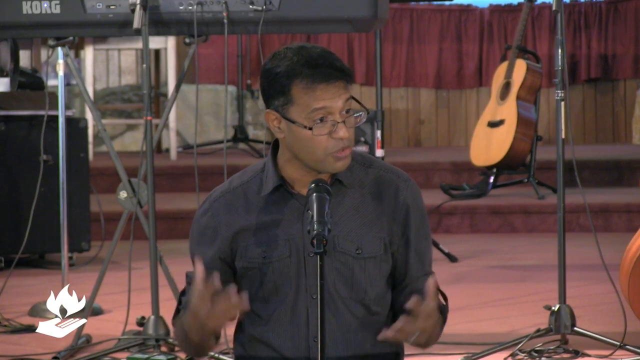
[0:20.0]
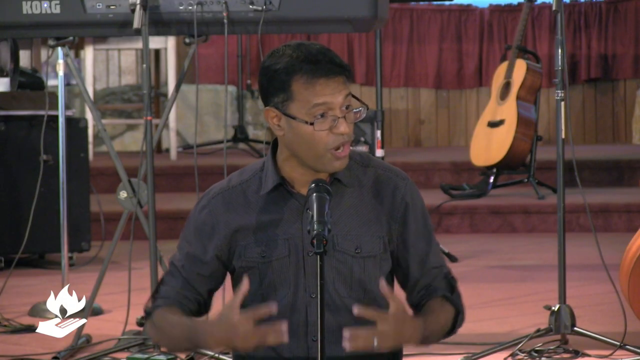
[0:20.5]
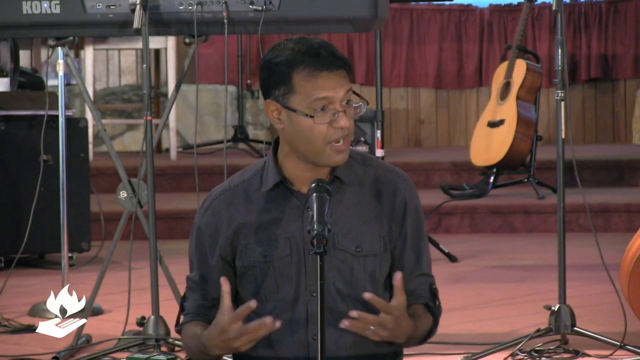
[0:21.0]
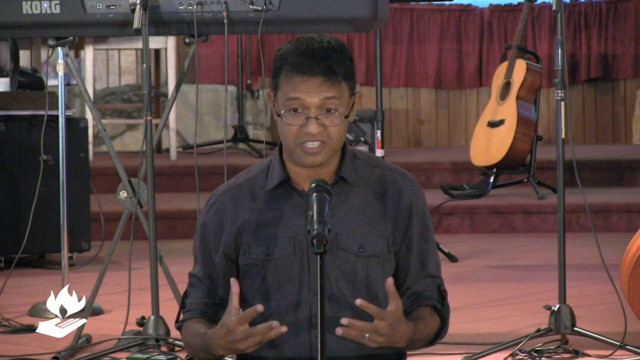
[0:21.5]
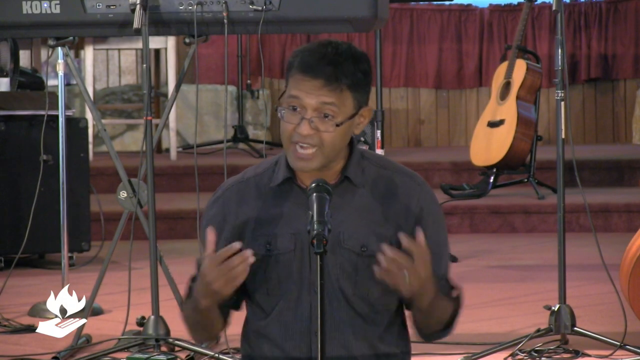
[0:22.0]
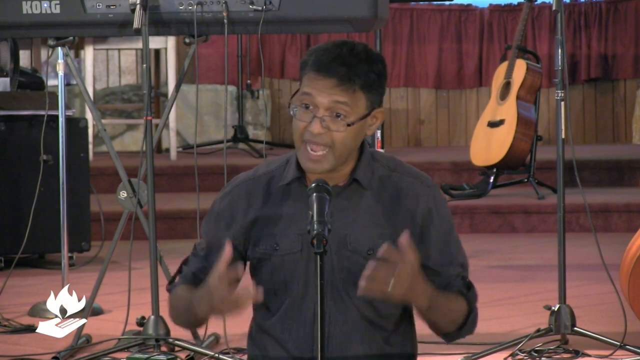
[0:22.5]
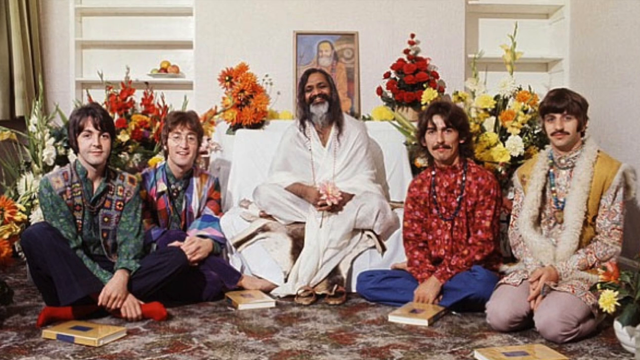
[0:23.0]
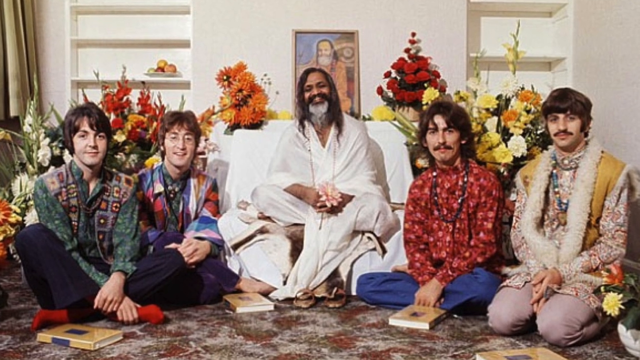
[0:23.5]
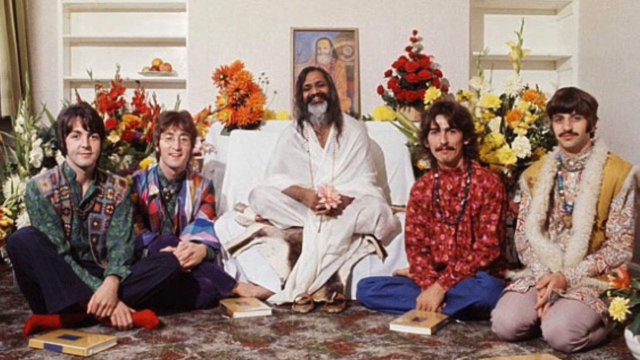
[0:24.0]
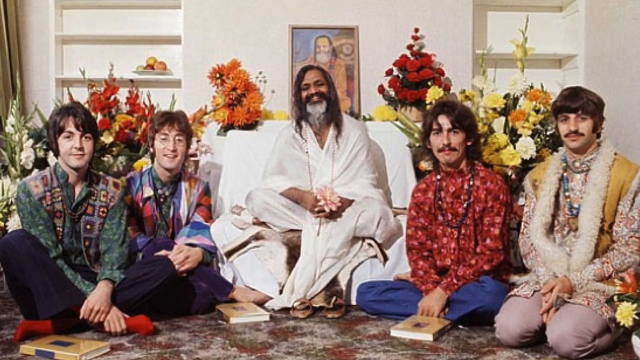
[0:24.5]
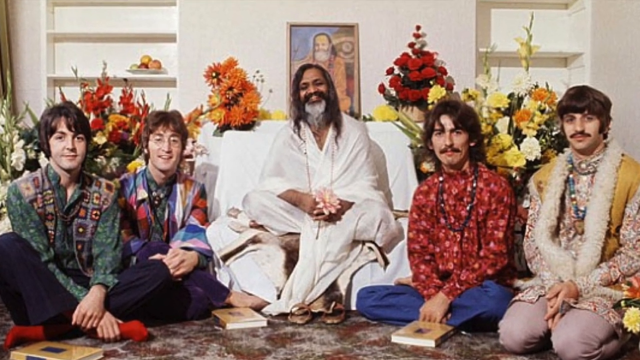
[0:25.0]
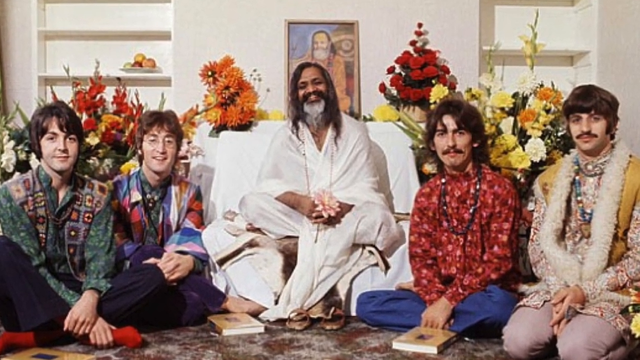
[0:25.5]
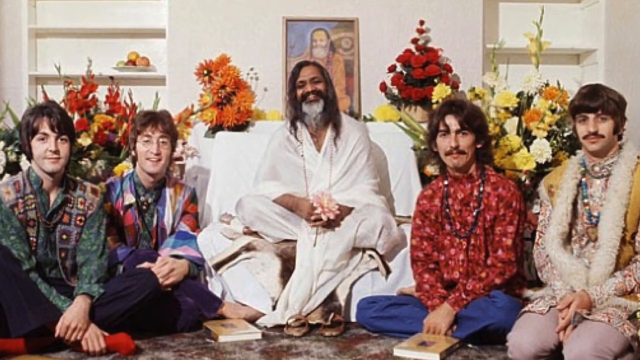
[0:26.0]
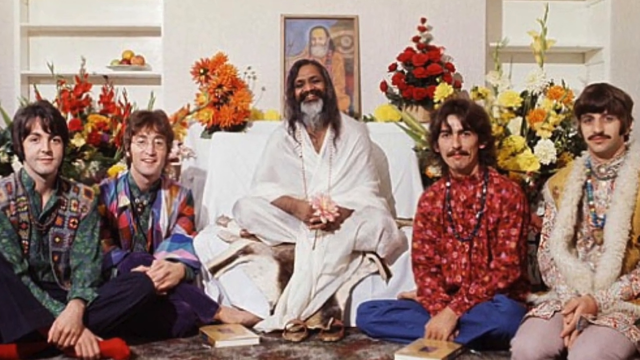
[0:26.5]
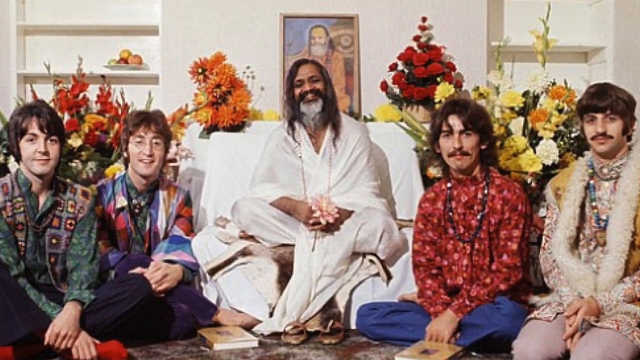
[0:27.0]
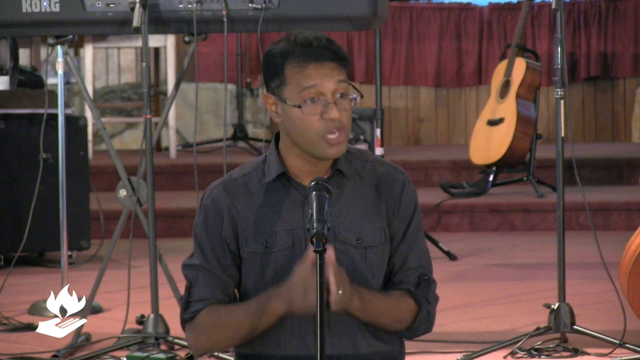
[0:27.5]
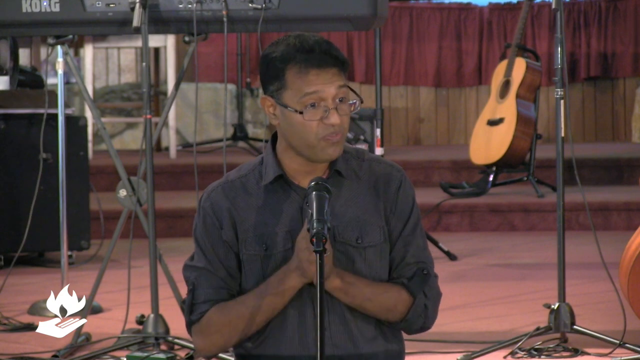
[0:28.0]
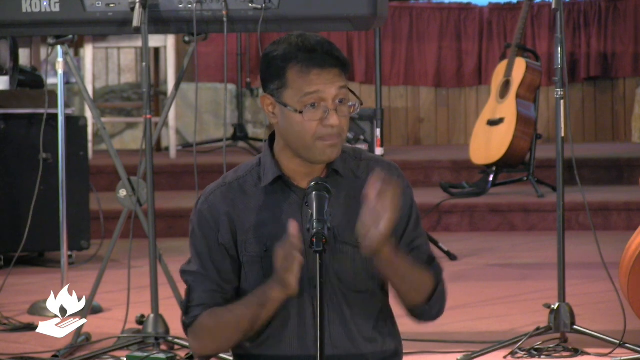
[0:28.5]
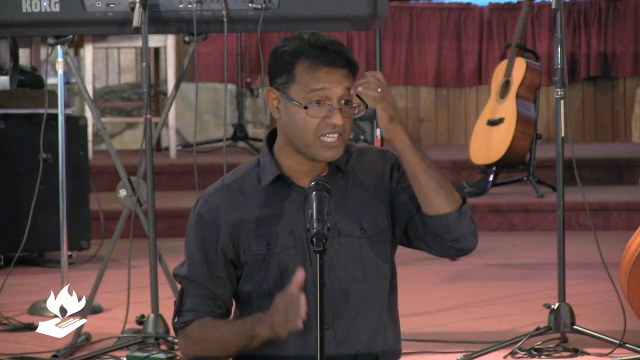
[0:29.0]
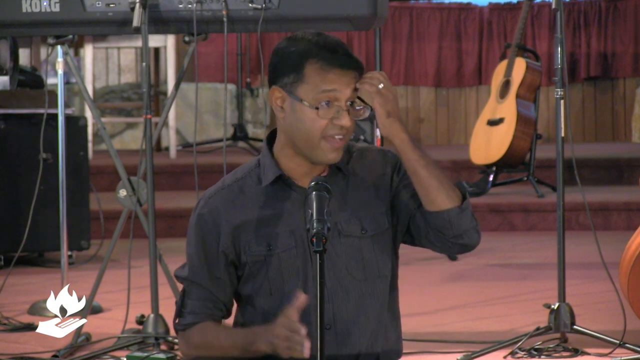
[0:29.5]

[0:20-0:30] A man in a gray button-up shirt and glasses talks with both arms out, using hand gestures. Behind him there is a beige guitar to the right and some other equipment in the background, not fully visible. He appears to be on some sort of stage, with a floor that looks burgundy or brown. A picture then shows what is apparently a Hindu family: seemingly two boys on the left and two boys on the right, the two on the right with mustaches. The man in the middle has a long gray beard mixed with black and shoulder-length straight black hair. Flowers are behind all of the men. The view returns to the man speaking at the mic with the guitar behind him.